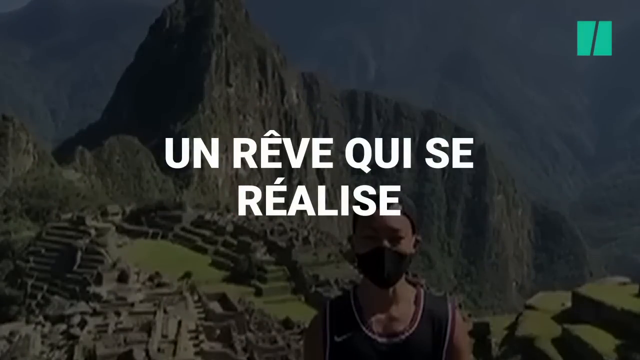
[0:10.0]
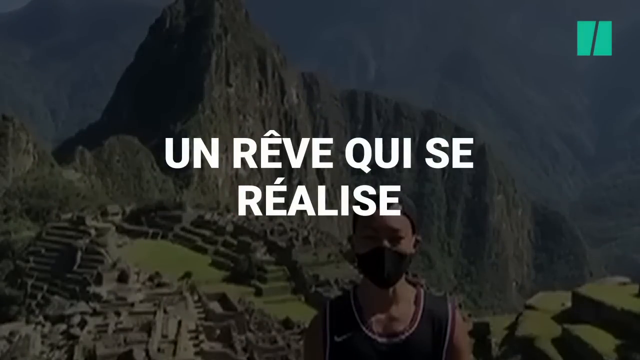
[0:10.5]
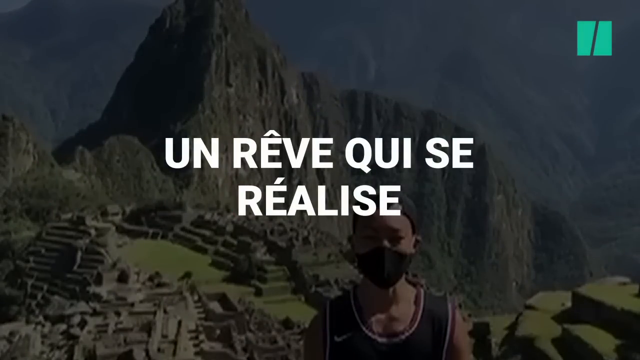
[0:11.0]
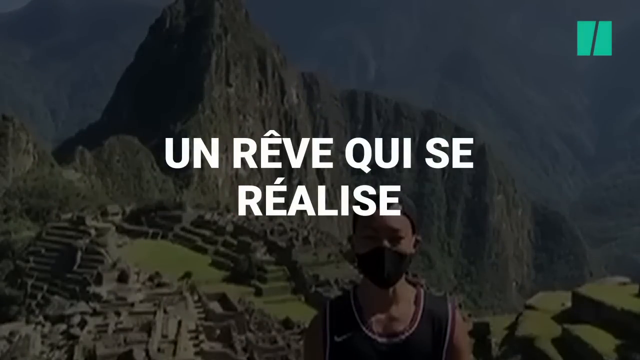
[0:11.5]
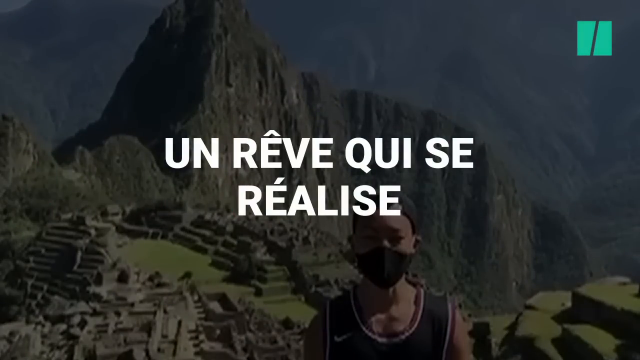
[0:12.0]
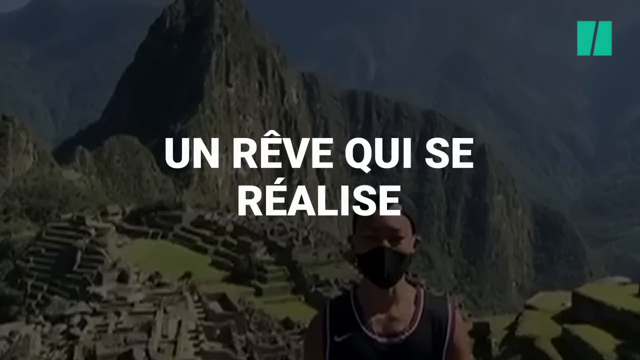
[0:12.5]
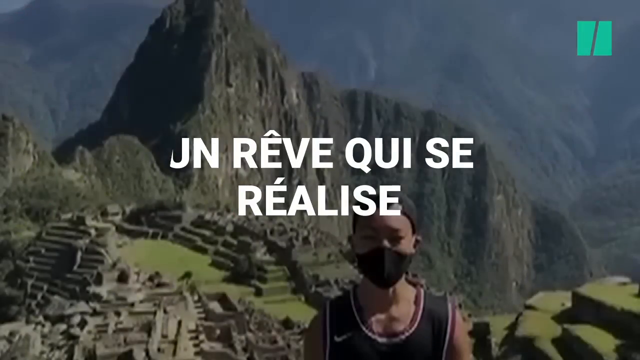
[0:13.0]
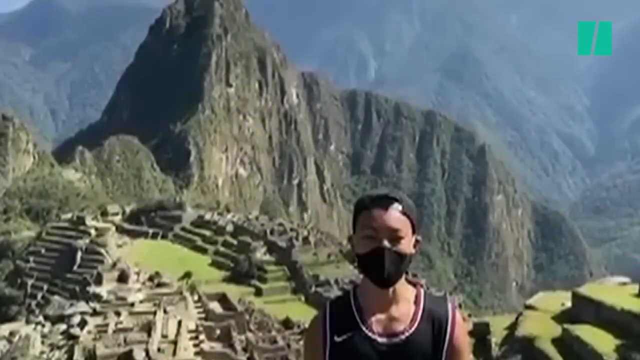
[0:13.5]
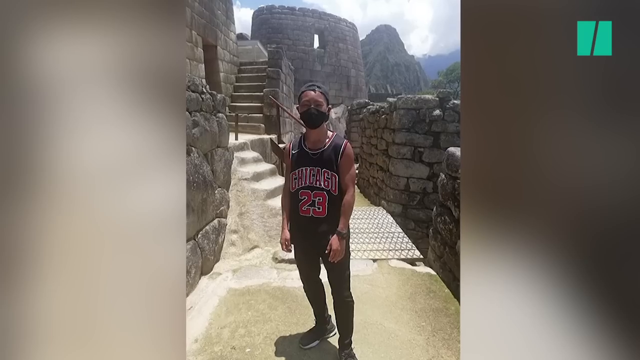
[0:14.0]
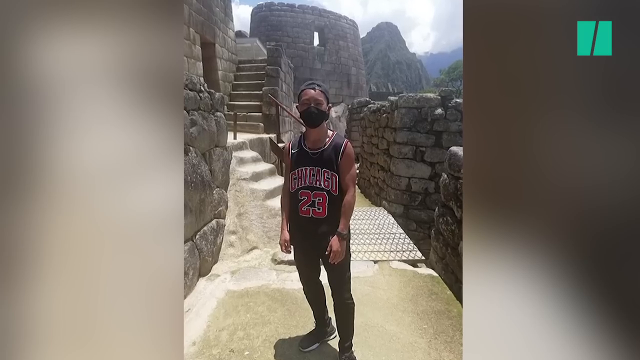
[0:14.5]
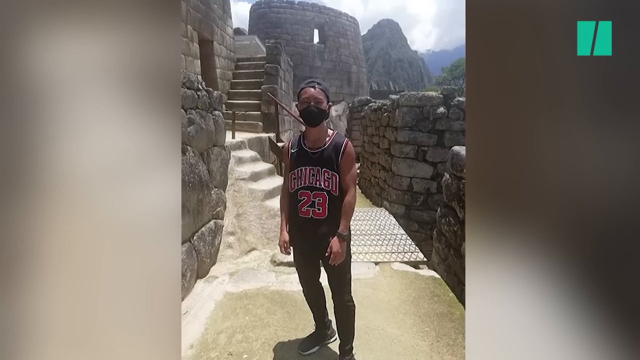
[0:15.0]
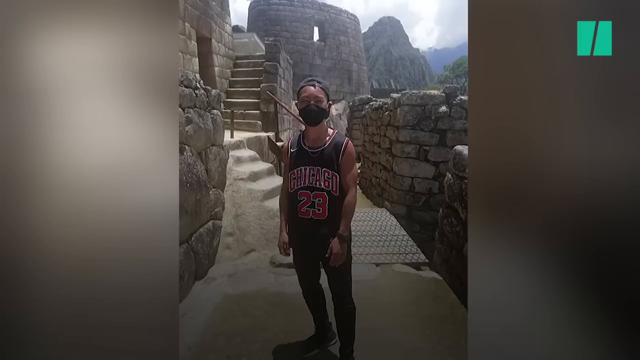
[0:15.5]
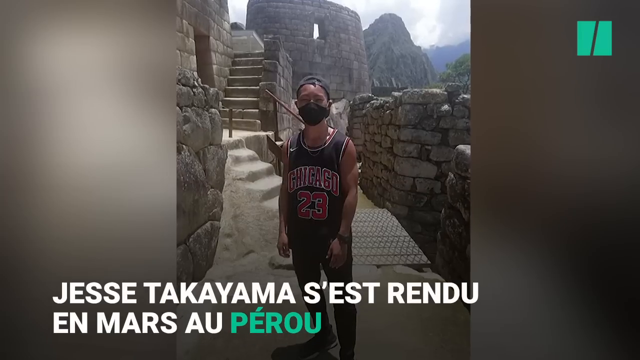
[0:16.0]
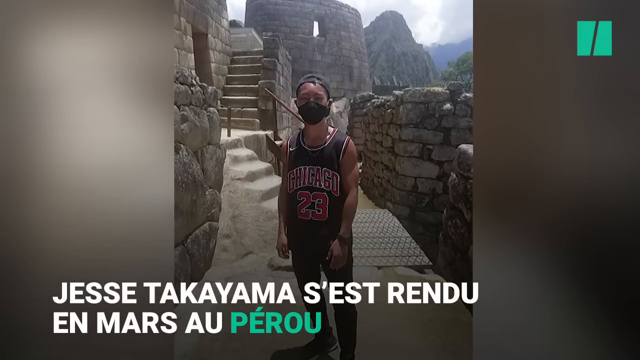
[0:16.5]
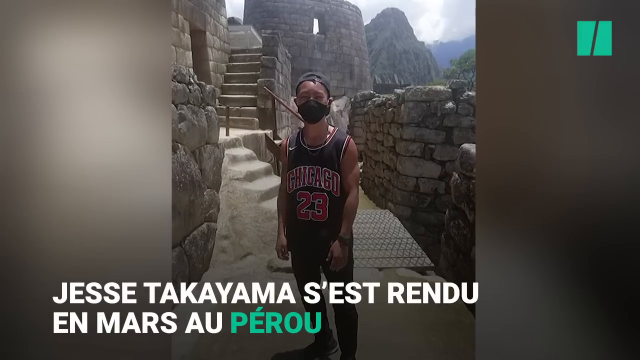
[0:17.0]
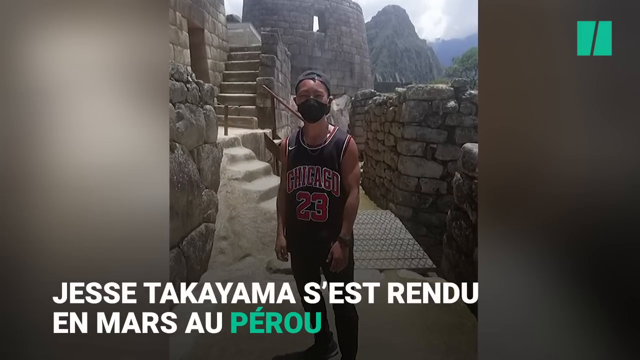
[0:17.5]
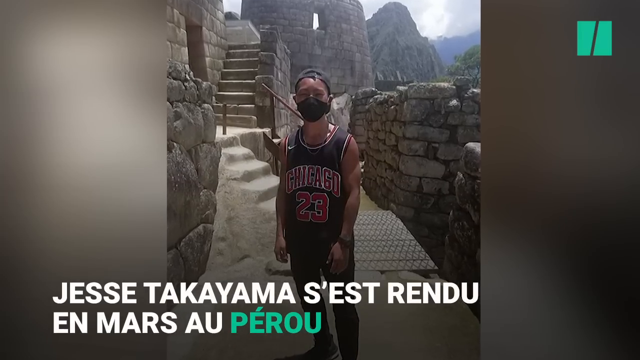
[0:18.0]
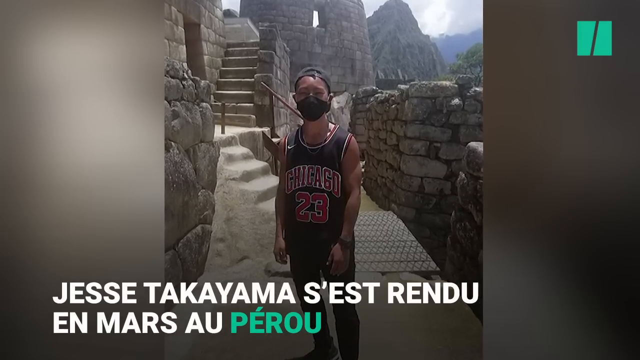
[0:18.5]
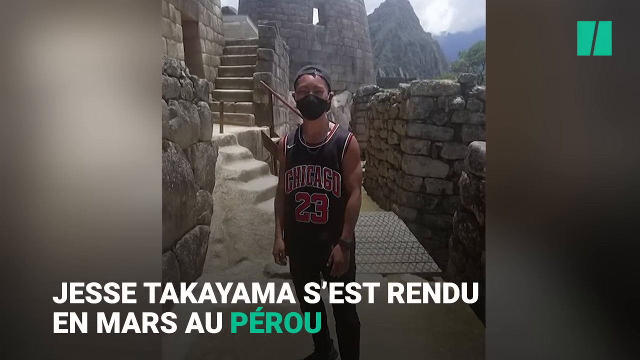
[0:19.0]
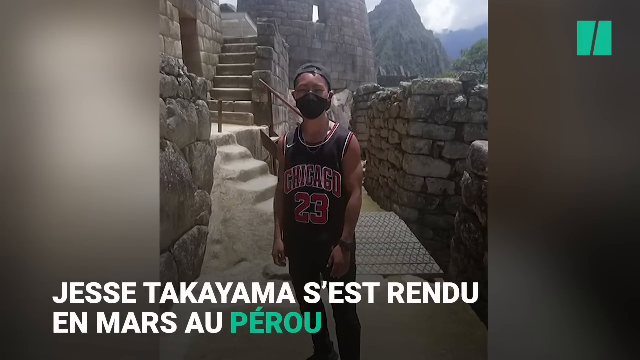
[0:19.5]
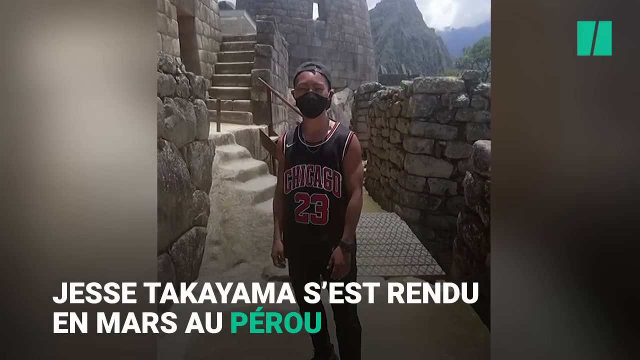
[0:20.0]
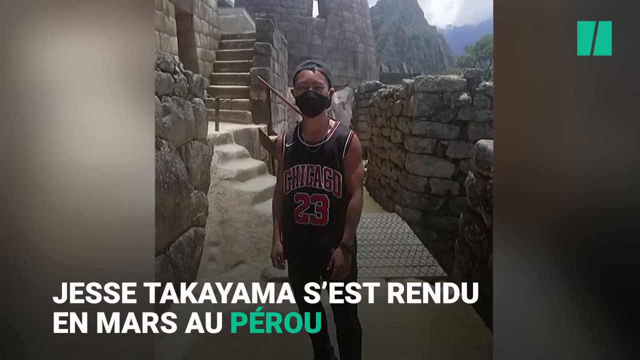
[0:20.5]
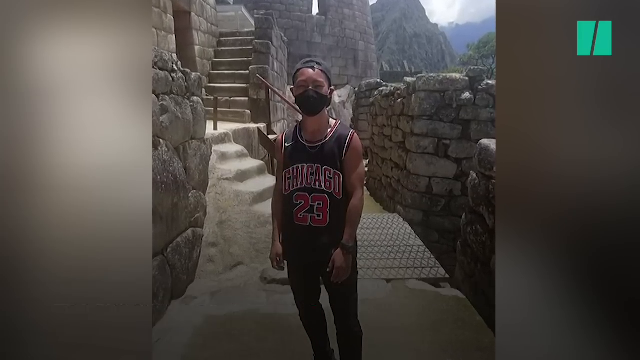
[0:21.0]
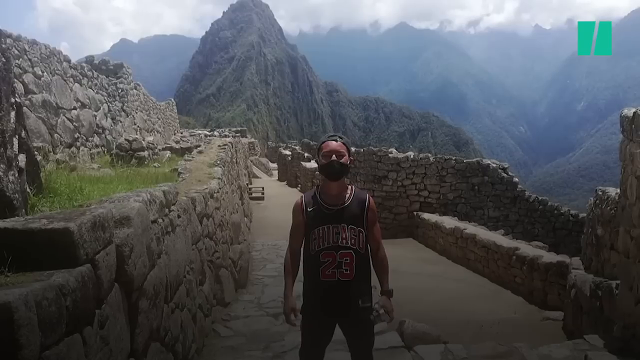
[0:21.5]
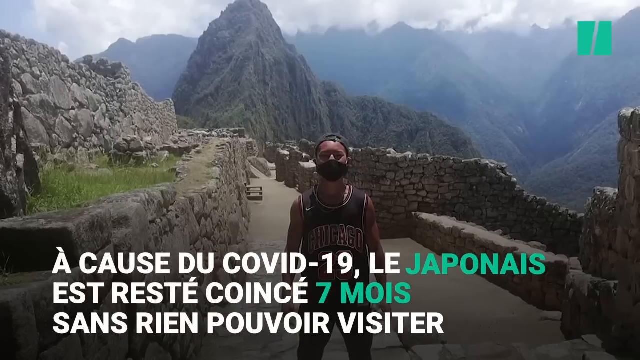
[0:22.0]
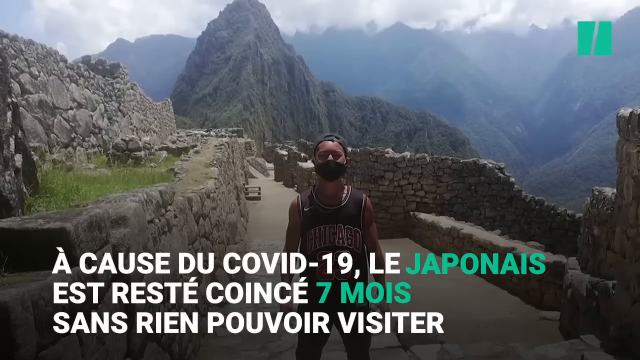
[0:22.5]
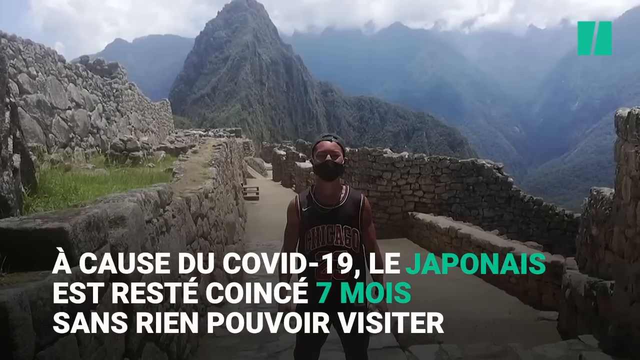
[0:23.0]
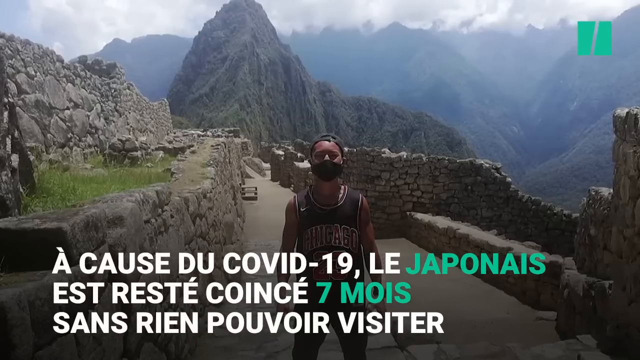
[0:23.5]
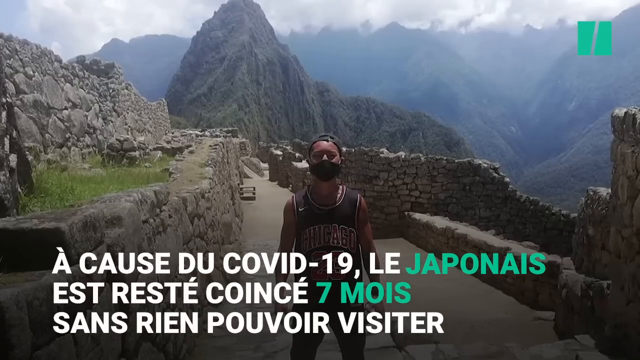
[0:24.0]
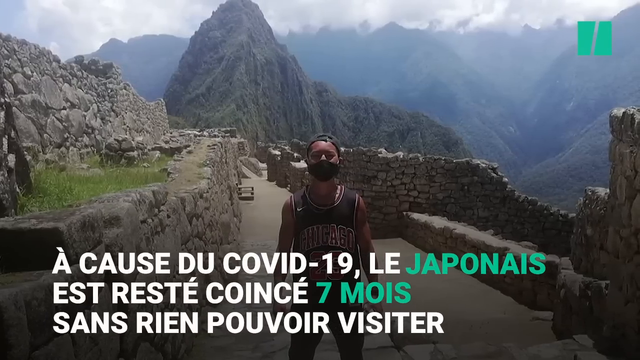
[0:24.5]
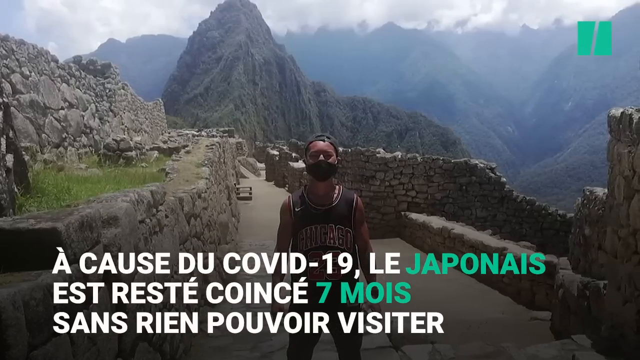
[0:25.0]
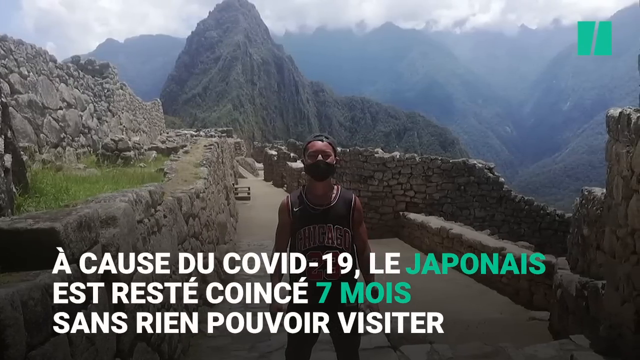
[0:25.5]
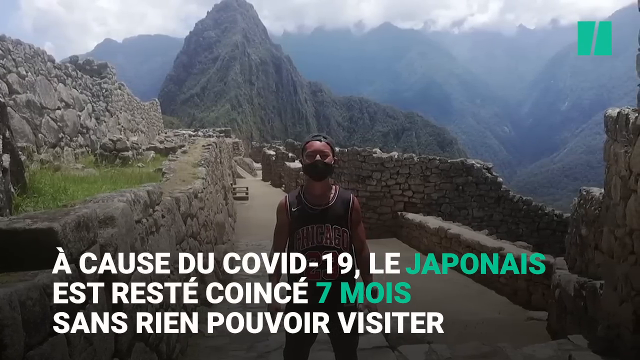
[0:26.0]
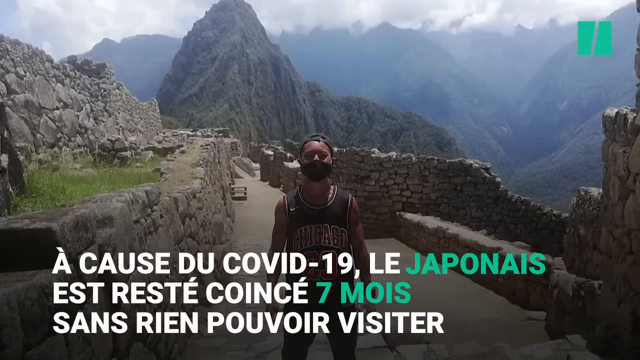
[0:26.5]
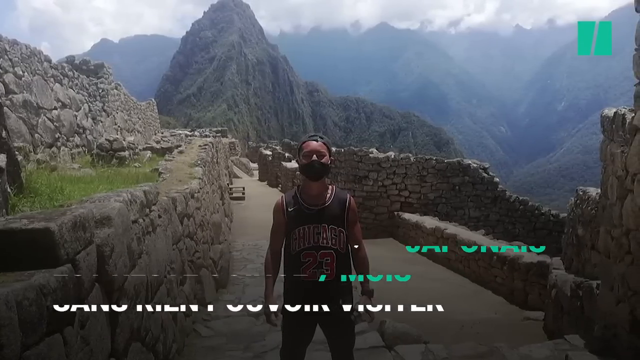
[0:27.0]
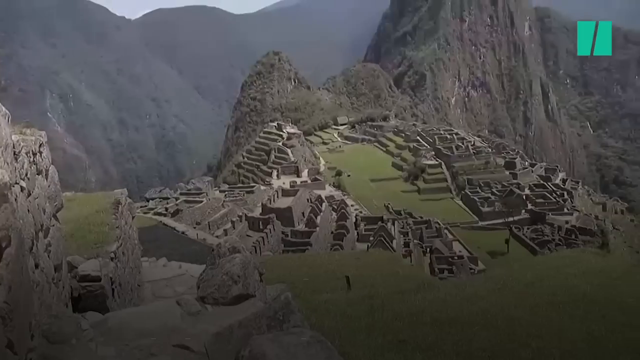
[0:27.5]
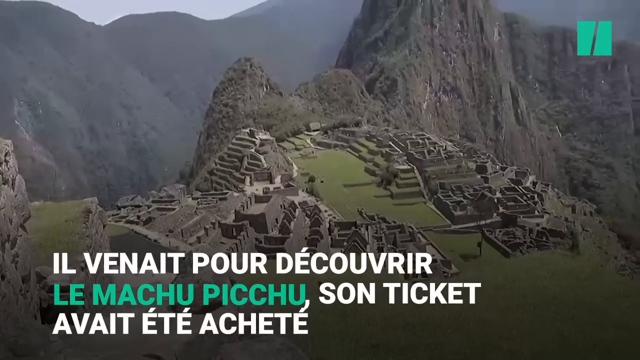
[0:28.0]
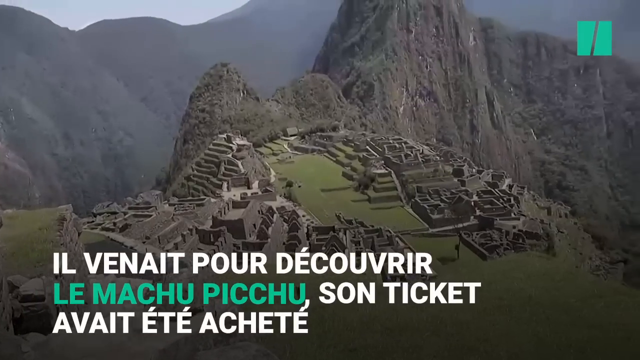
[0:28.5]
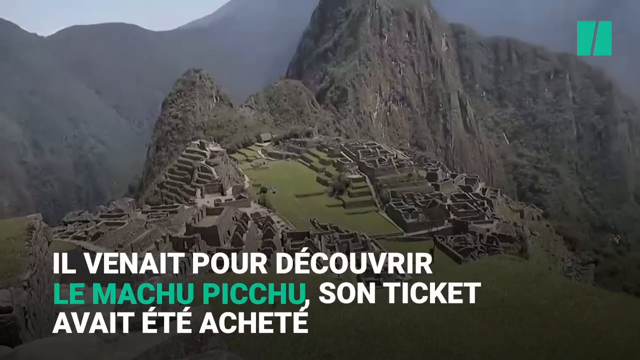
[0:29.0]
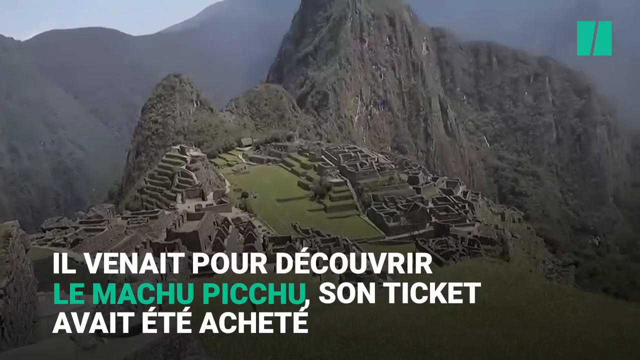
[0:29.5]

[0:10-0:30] The same man, in the same hat and mask, now wears a Chicago Bulls jersey, Michael Jordan's number 23, along with an Apple watch, joggers and black shoes. A picture of him is taken in a small, castle-like area with bricks and brick structures in the background. There is smoke, there are many trees, and the sky is clear. A caption appears, apparently in French, that mentions Peru, so he is apparently in Peru. Another picture of him follows, showing a different angle of the mountain area; he is posing, with the brick structures and a walking area visible.